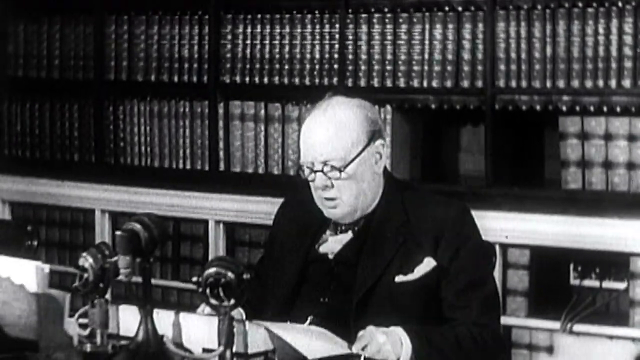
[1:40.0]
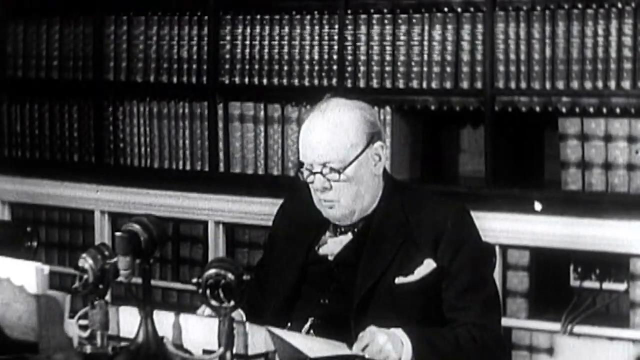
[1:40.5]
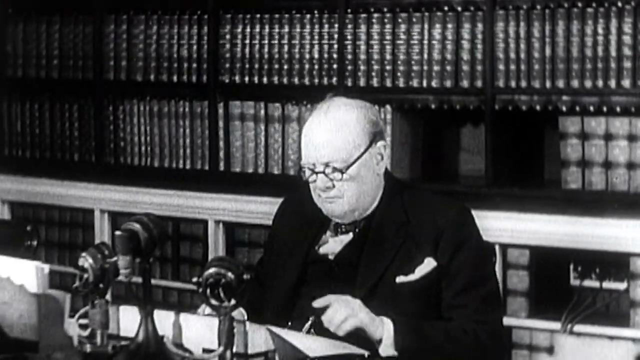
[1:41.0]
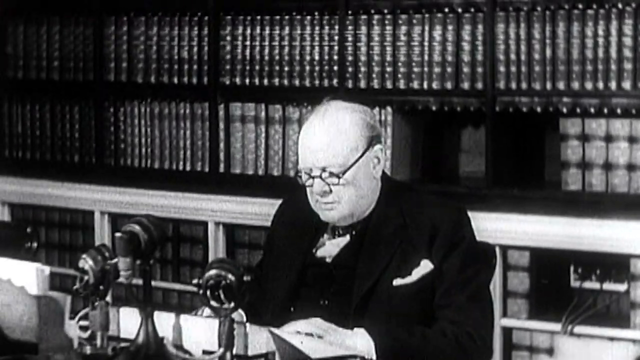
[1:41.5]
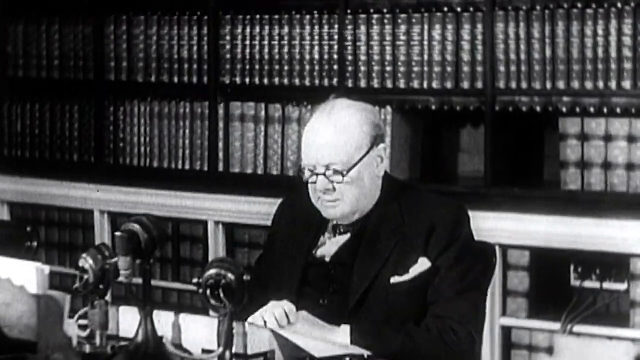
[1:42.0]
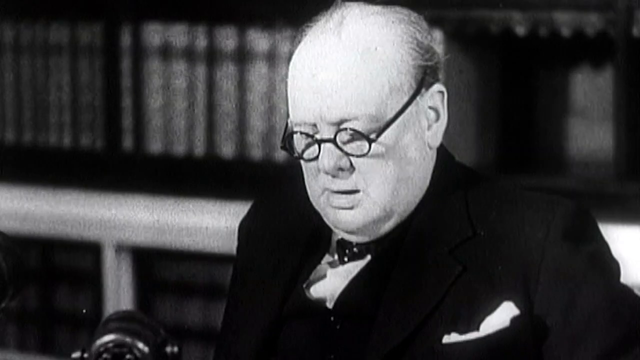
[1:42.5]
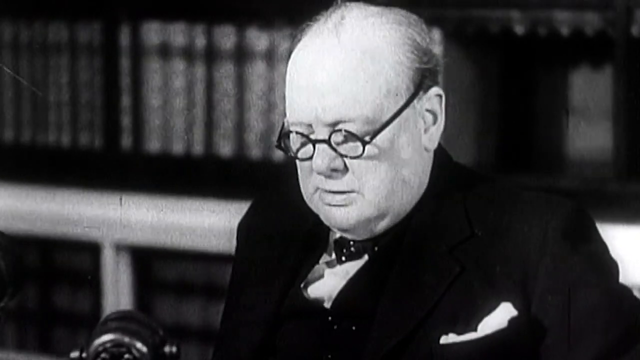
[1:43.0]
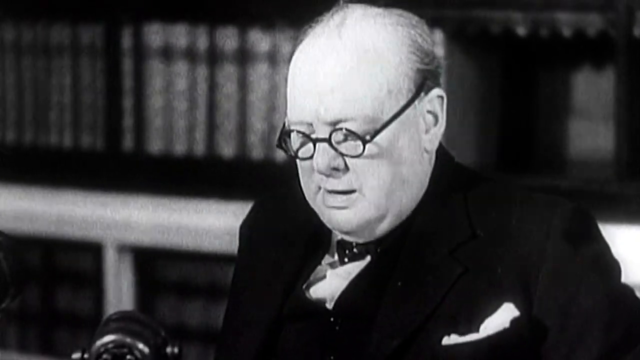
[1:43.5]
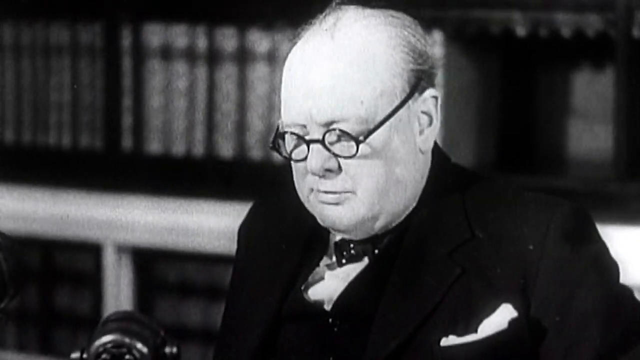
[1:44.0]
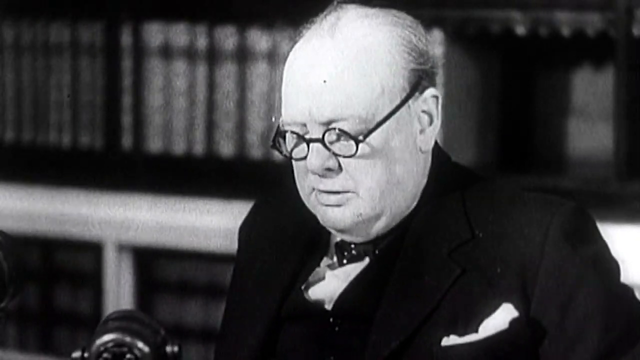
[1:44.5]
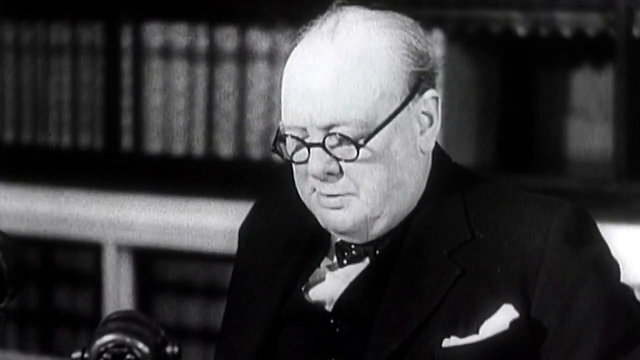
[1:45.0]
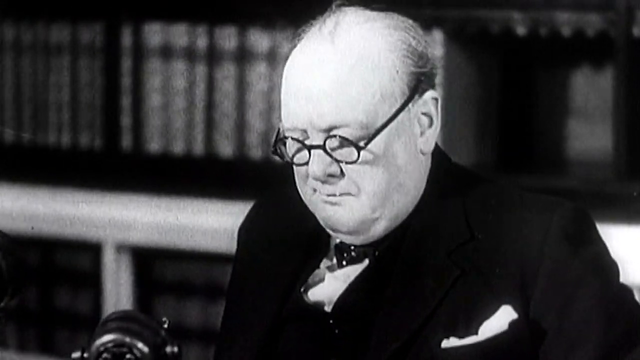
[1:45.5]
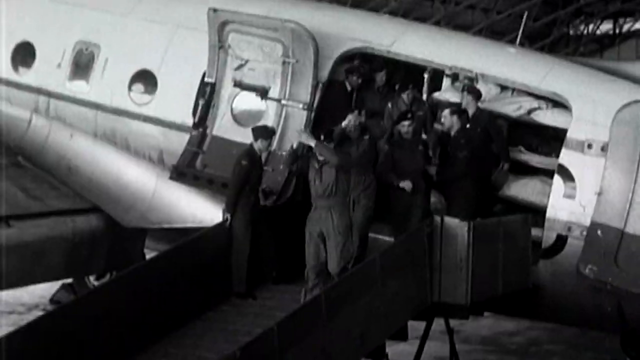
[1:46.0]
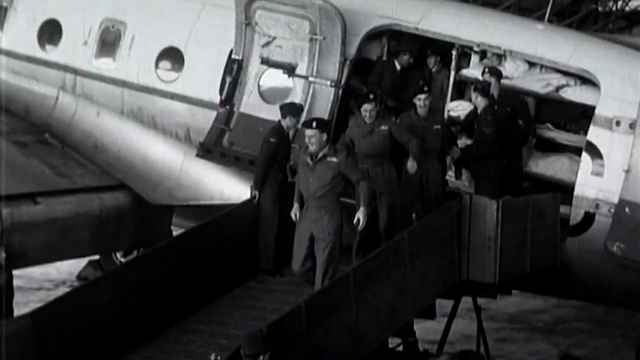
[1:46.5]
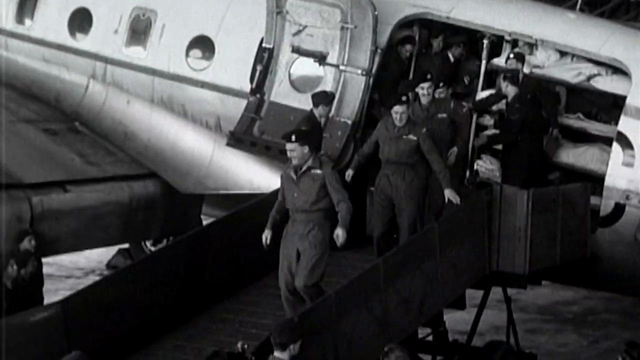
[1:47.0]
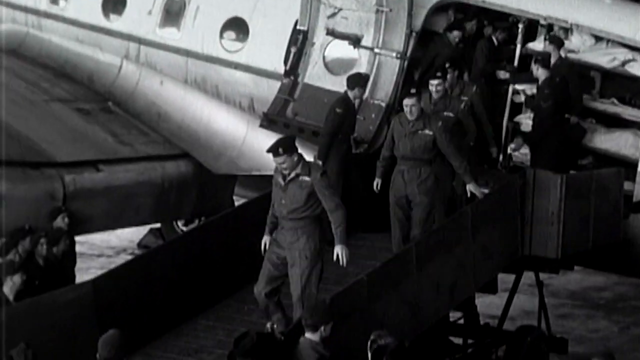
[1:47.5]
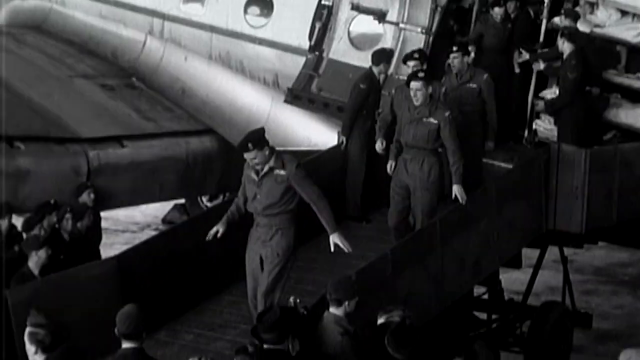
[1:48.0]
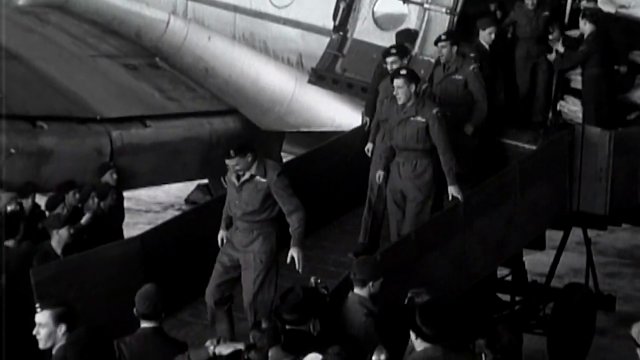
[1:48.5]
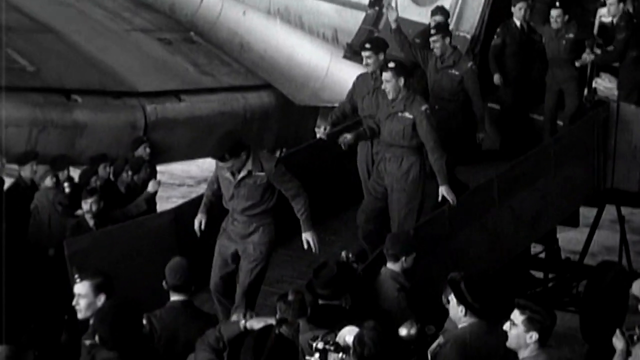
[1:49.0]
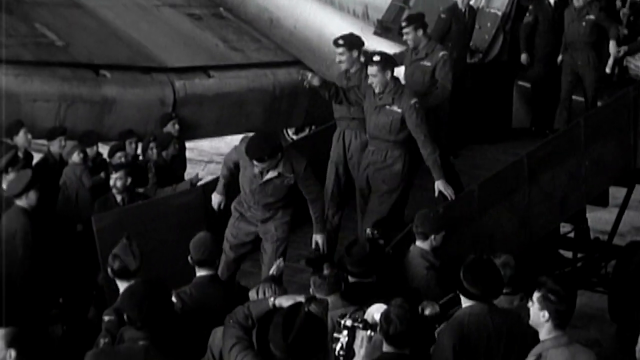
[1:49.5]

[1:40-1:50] An elderly man is seated at a desk, speaking, with microphones on top of the desk in front of him and books on shelves behind him. He wears eyeglasses and reads from a document. Men in uniform then exit a plane, coming down the stairway. The video returns to the elderly man in a chair talking to the microphones, followed by a close-up of his face. The man appears very serious about the subject he is talking about.